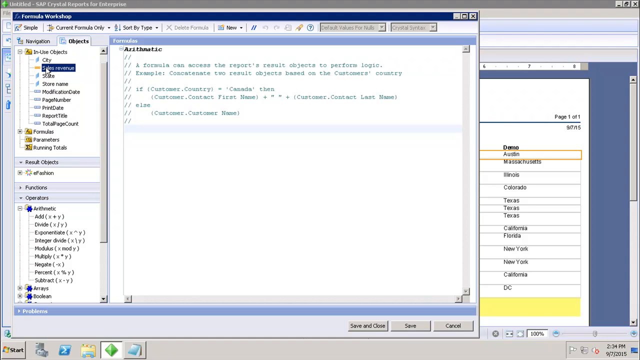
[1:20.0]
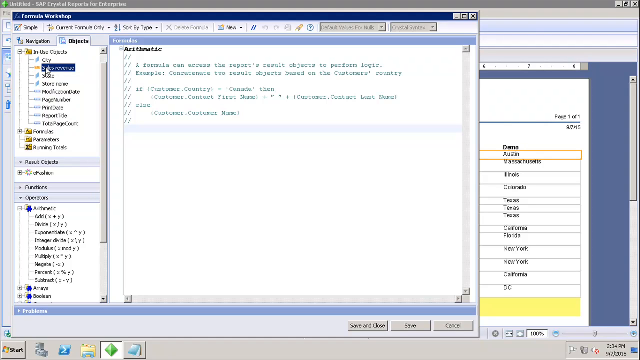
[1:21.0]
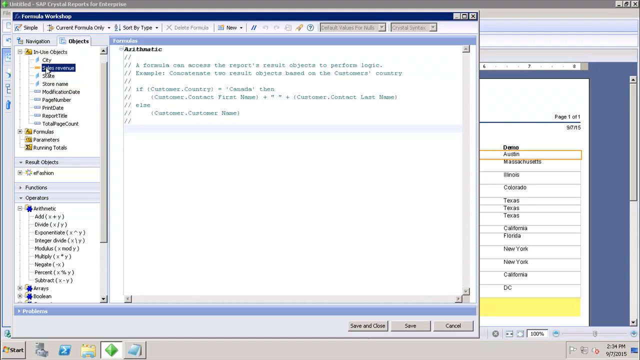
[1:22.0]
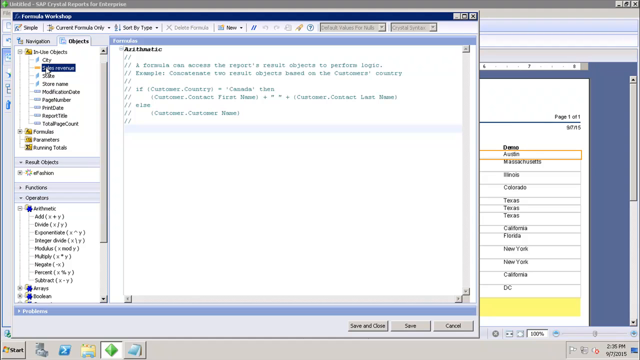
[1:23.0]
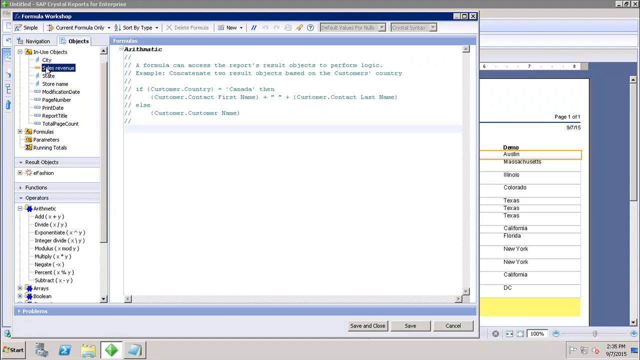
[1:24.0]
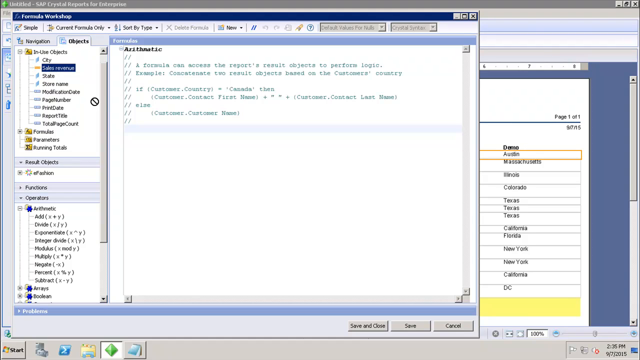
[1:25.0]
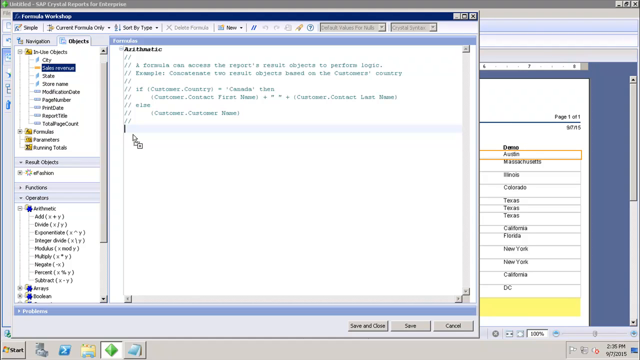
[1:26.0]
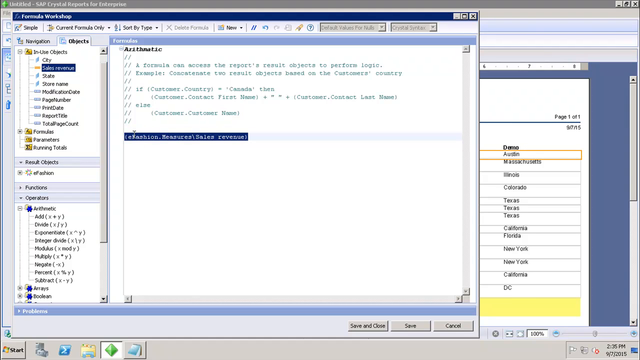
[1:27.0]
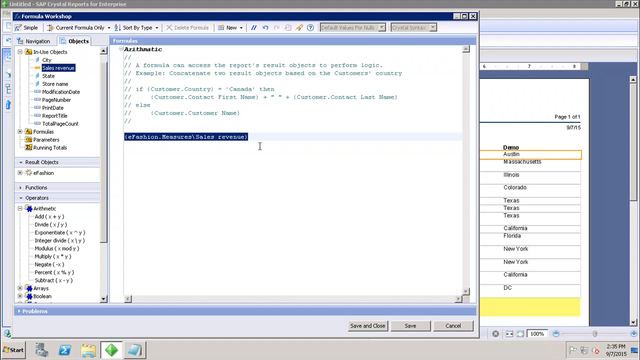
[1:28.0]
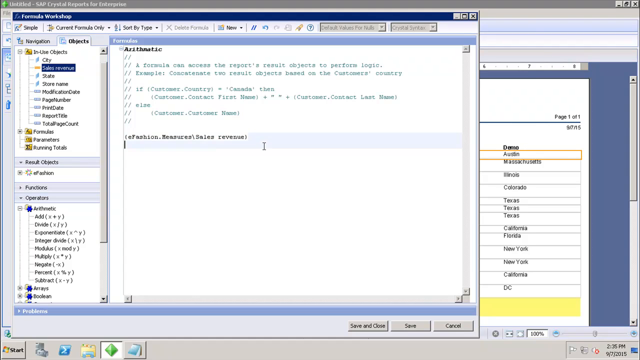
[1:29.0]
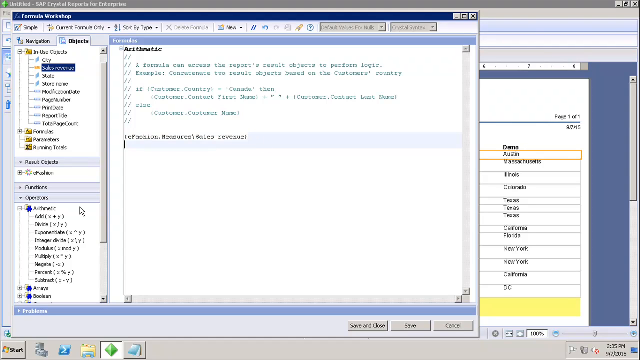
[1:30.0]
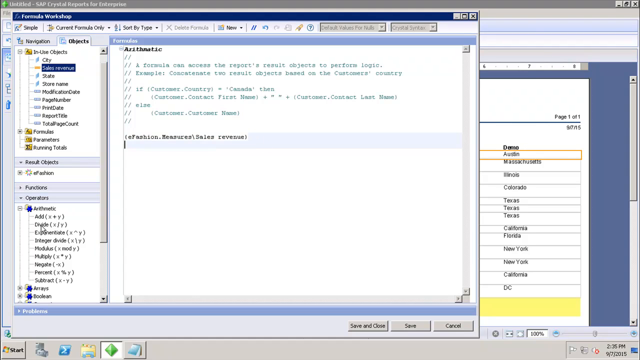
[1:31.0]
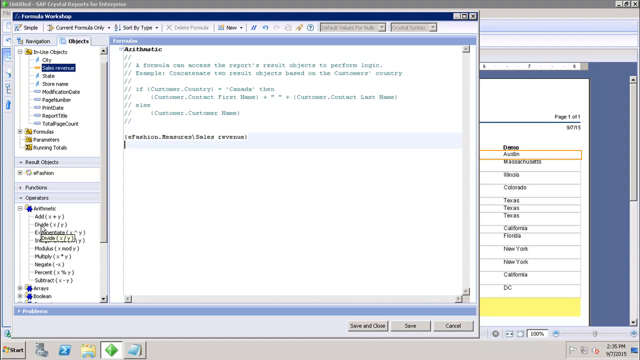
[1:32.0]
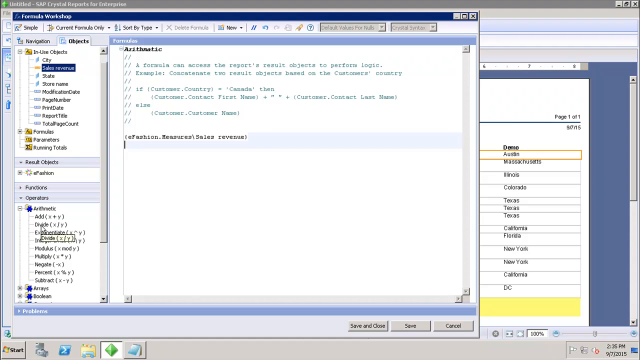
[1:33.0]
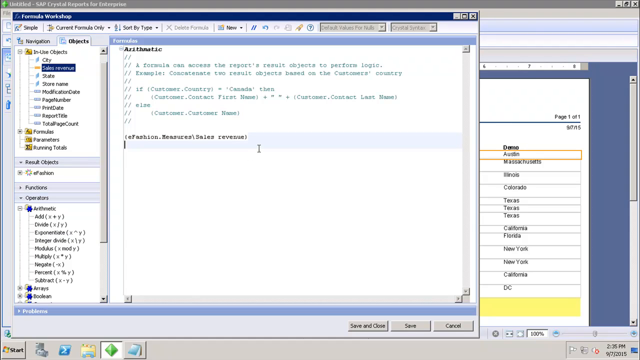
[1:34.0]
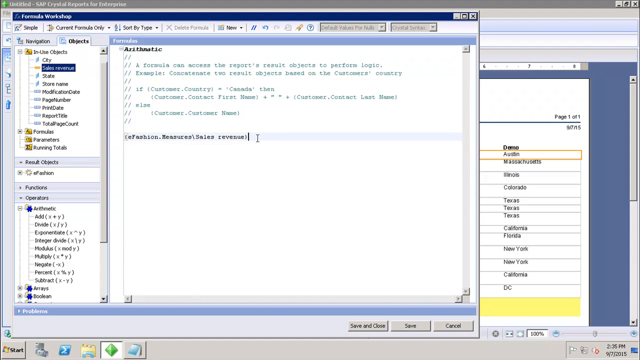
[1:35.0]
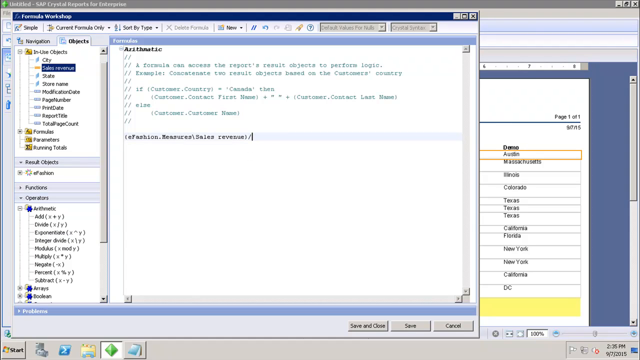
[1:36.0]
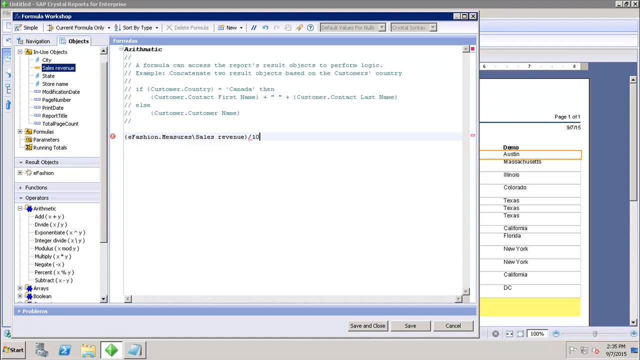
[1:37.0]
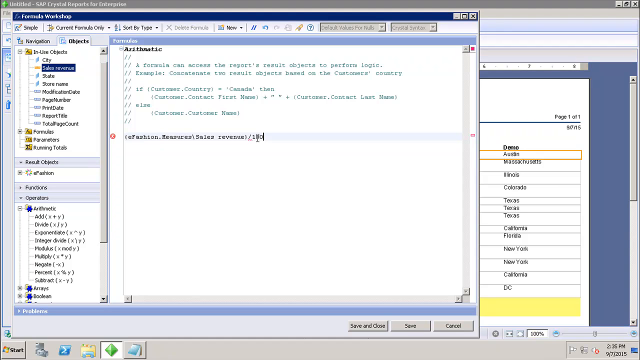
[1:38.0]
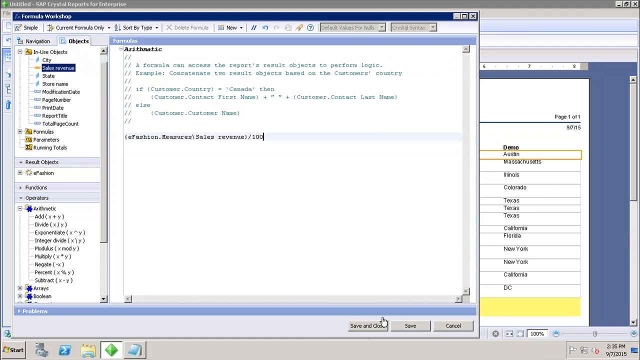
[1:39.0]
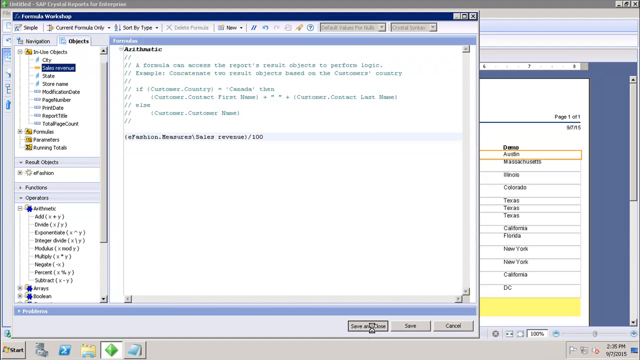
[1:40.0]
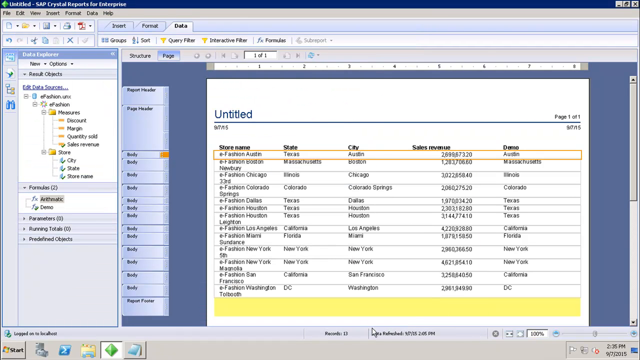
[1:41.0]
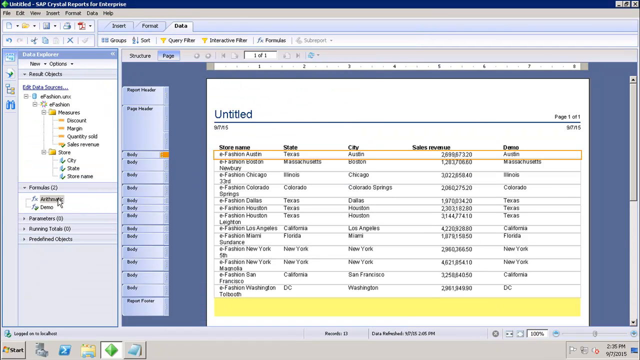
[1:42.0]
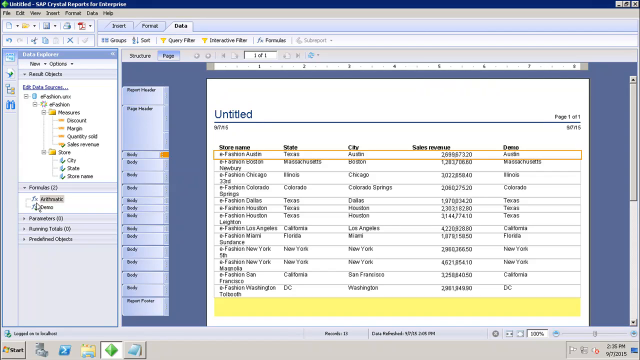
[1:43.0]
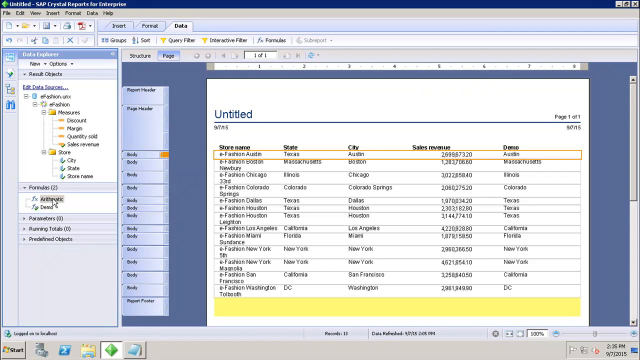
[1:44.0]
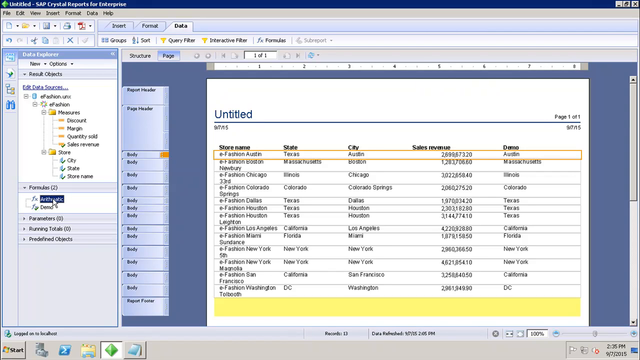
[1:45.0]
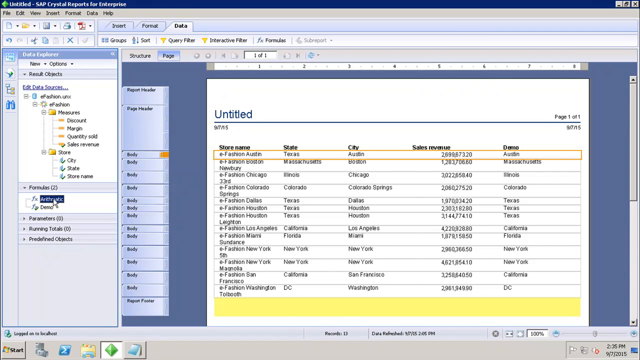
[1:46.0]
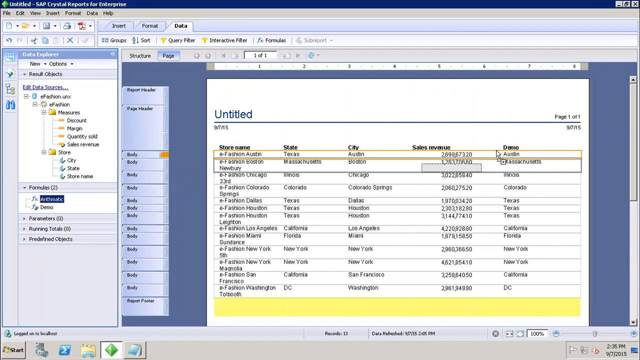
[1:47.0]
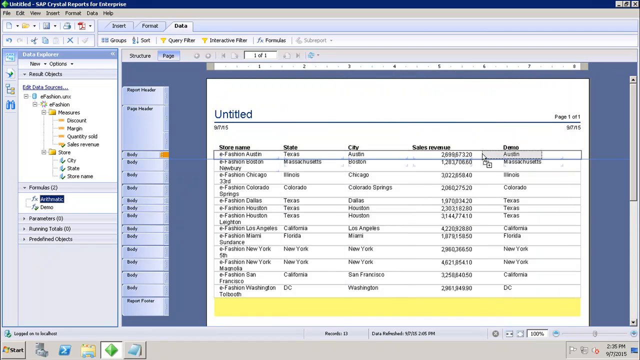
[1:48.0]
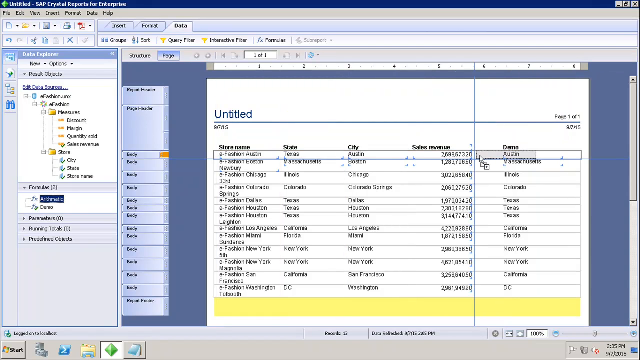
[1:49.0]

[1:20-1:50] The person is still in the untitled document, in what may be a sub-document or pop-up. Black text reads "arithmetic," and green text below it appears to read along the lines of "if customer country" possibly equal to "canada" "then customer contact first name" with a plus sign and possibly two equal signs, then "customer contact last name else." It looks like some kind of code, possibly HTML. The person then clicks on operations and appears to click on sales revenue, listed under city. What they type is not visible. The text "sales revenue," "e-fashion" and apparently "measures" can be seen.